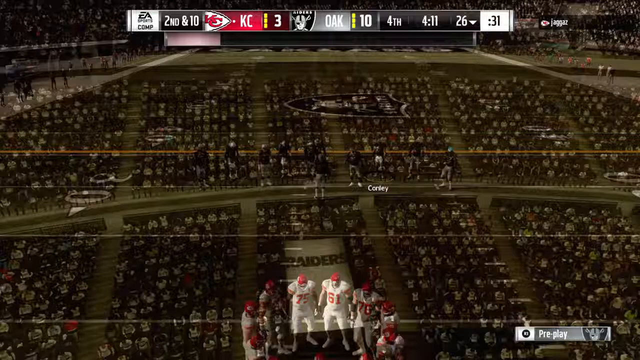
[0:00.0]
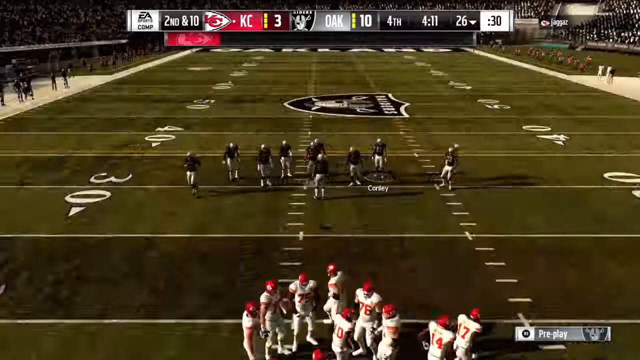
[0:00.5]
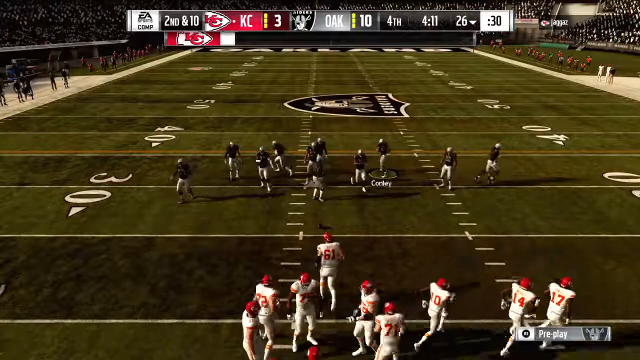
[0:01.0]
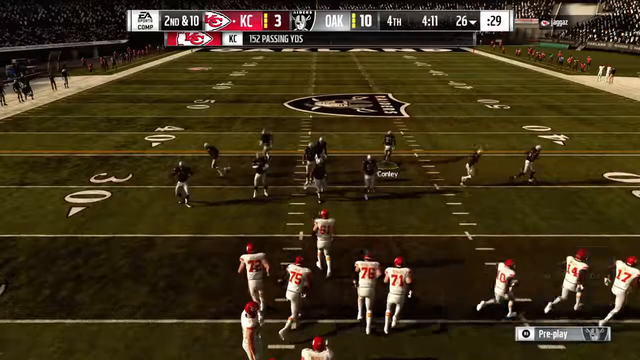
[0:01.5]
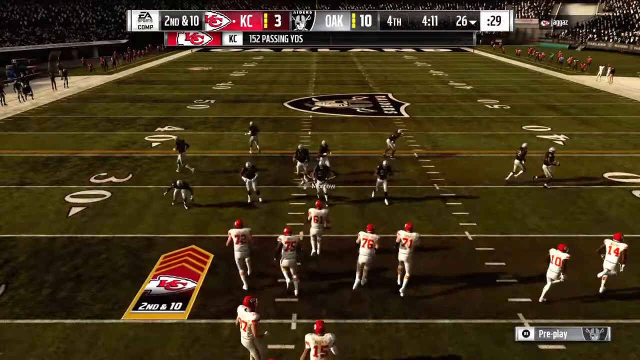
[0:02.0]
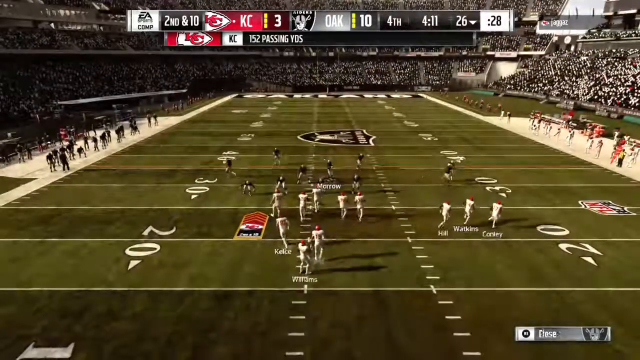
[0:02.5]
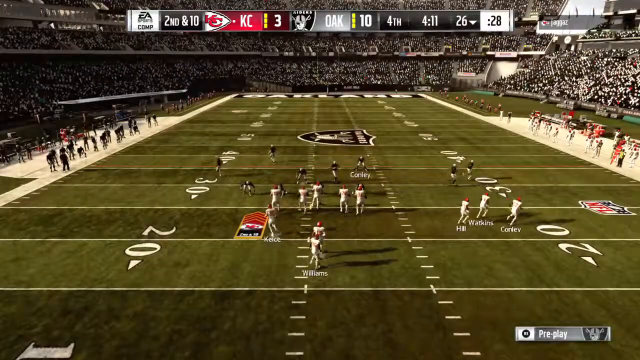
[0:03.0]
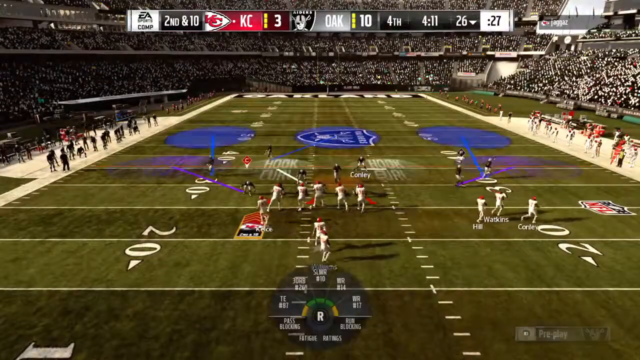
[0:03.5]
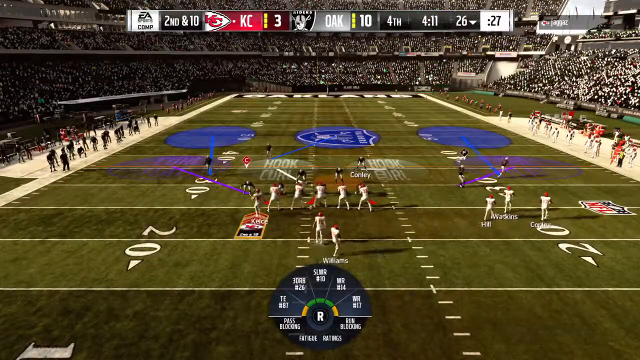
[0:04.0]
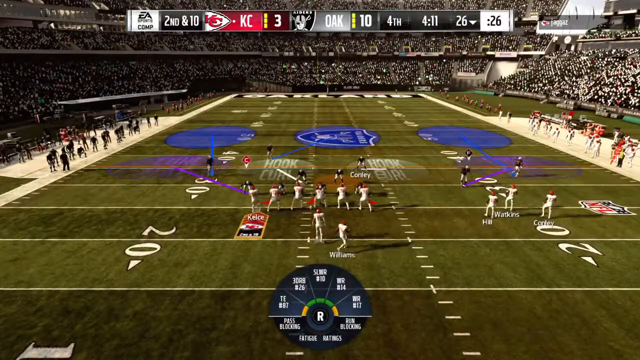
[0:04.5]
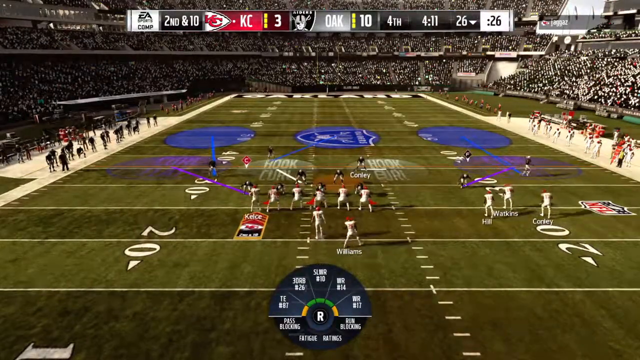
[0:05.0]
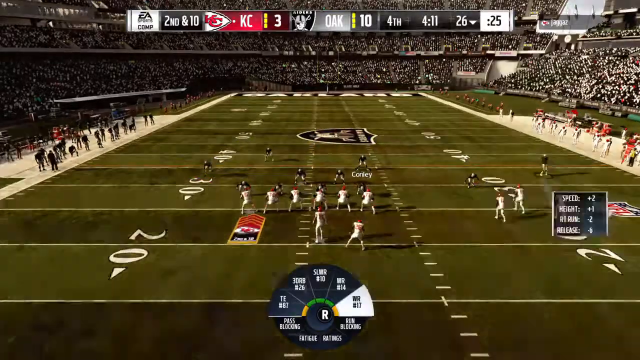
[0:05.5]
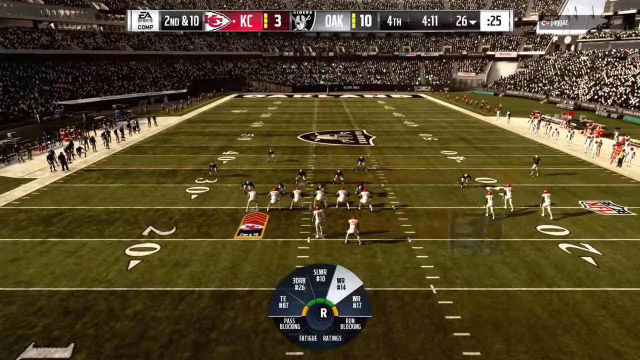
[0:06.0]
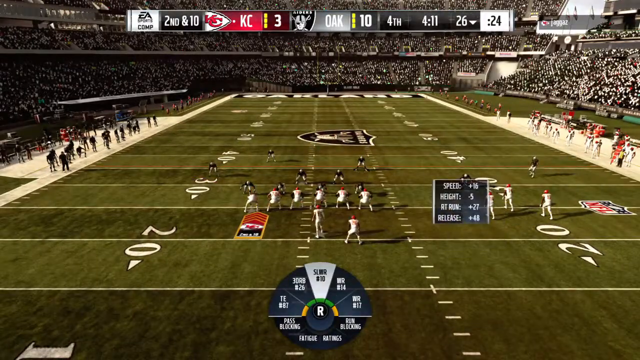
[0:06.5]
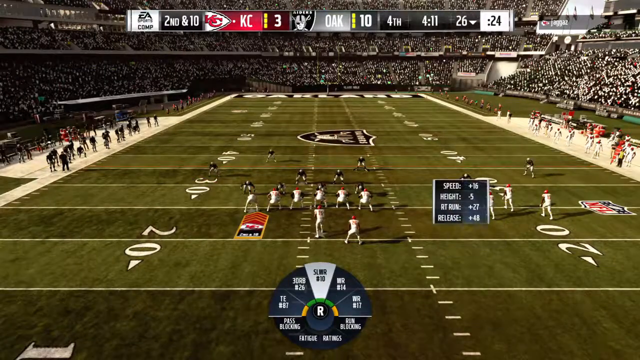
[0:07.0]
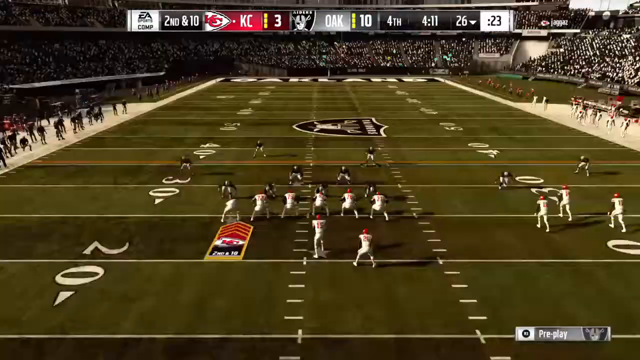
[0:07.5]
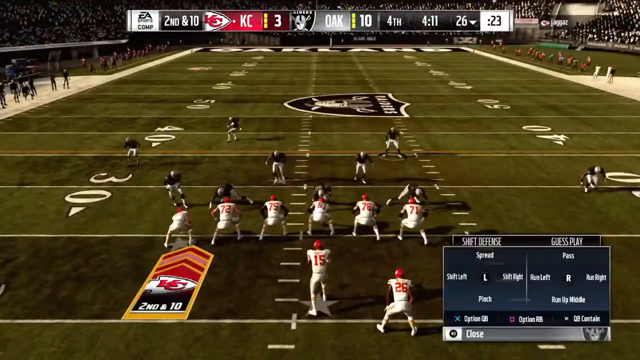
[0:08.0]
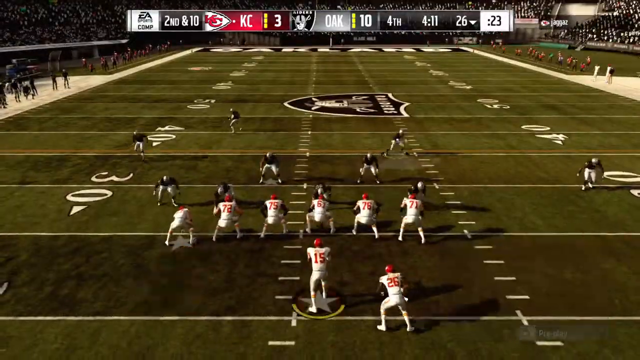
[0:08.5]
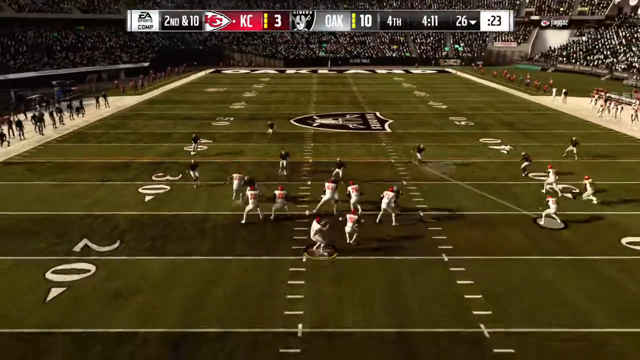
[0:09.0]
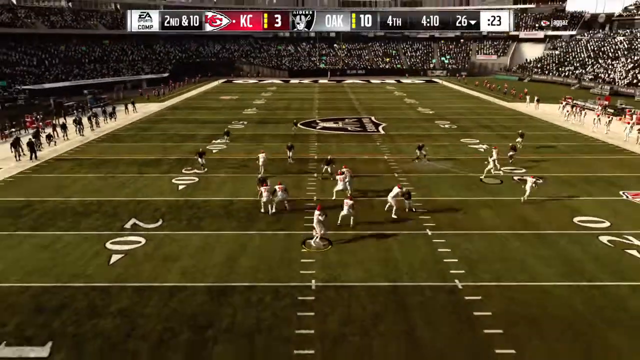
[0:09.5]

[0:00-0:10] What looks like an EA Sports video game of American football is shown. Two opposing sides run about the field as the game progresses; one side is dressed in black and white and the other in red and white. At the bottom centre is a circle with various instructions, such as pass blocking, run blocking and other options for playing the game, and the screen lights up with blue and purple colours and arrows showing where people can move to. The game is on a large green American football field, with the details of the game on a banner at the top and an audience in the graphically created stadium. Pop-ups appear on the screen with stats about particular characters, such as their speed and weight, and the view zooms in and shows them playing.